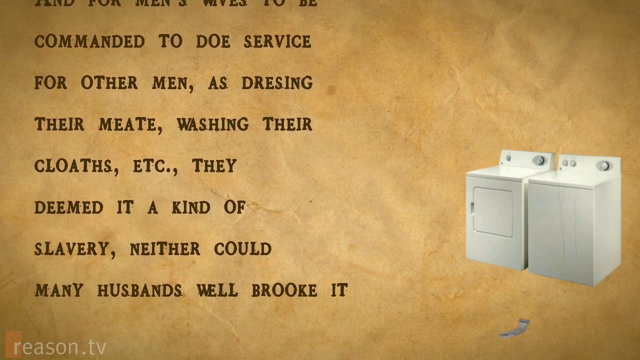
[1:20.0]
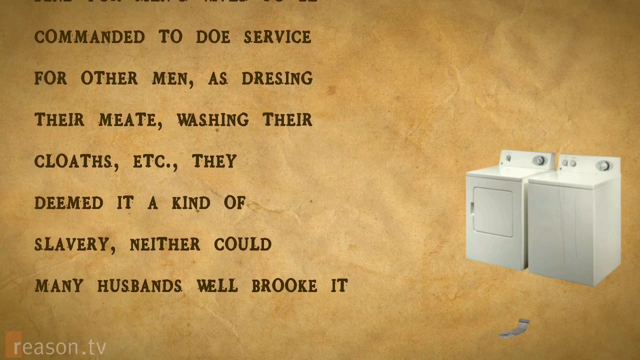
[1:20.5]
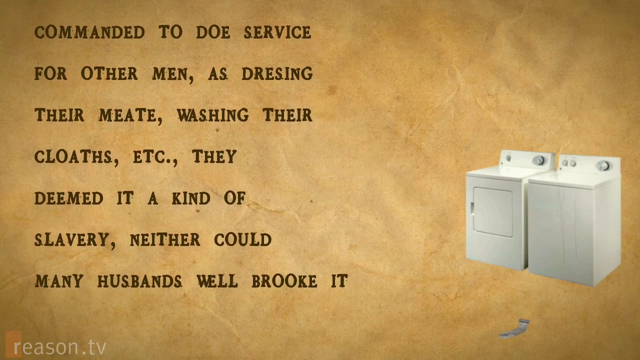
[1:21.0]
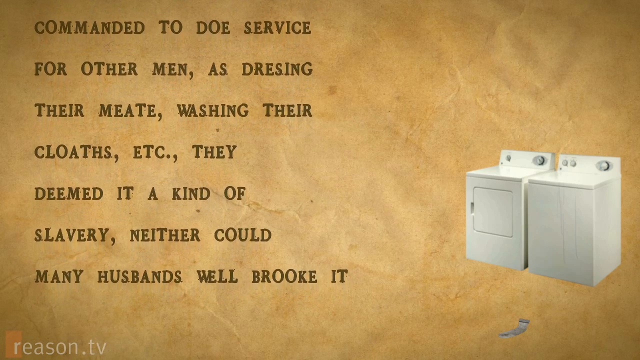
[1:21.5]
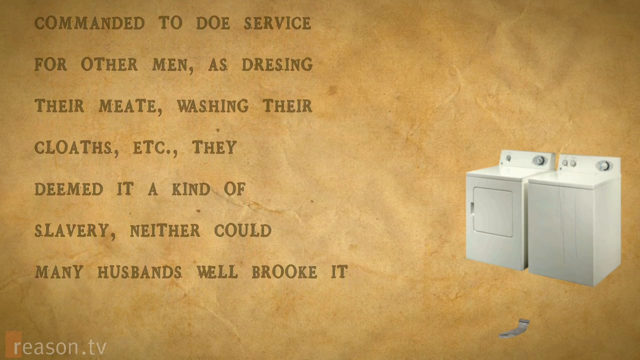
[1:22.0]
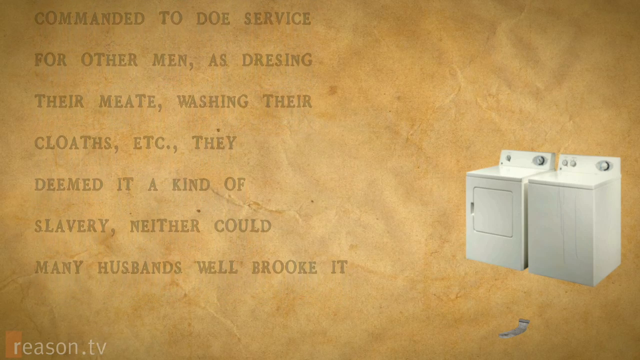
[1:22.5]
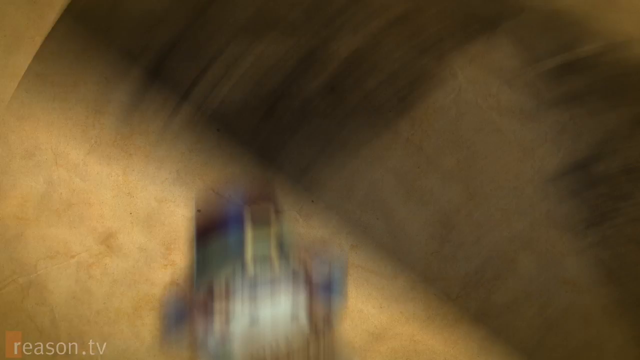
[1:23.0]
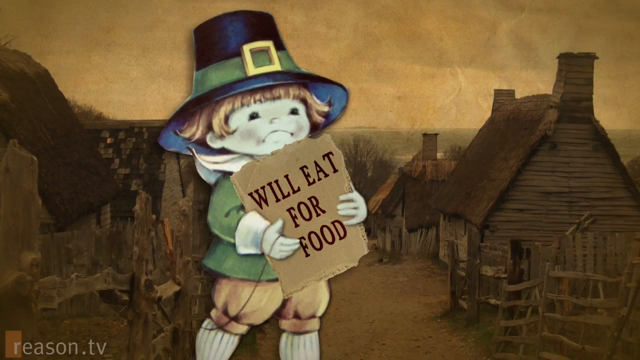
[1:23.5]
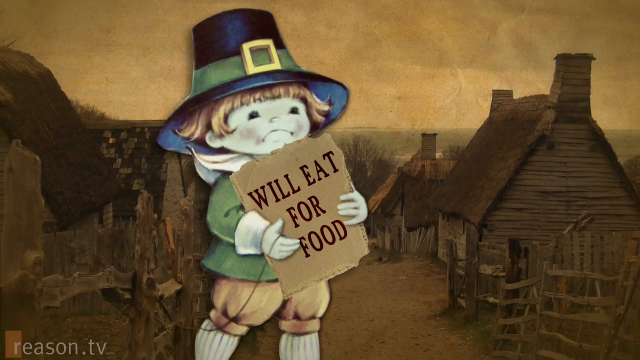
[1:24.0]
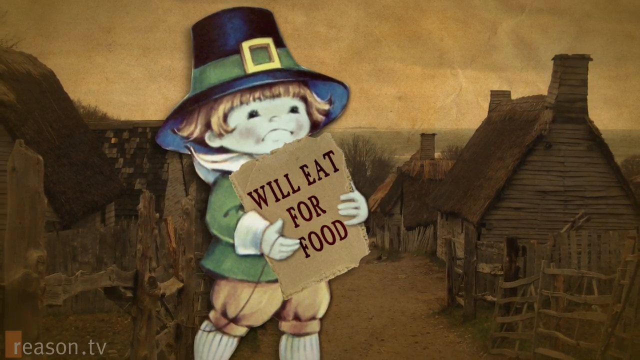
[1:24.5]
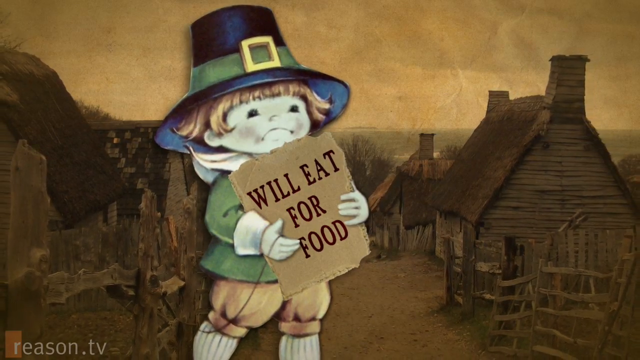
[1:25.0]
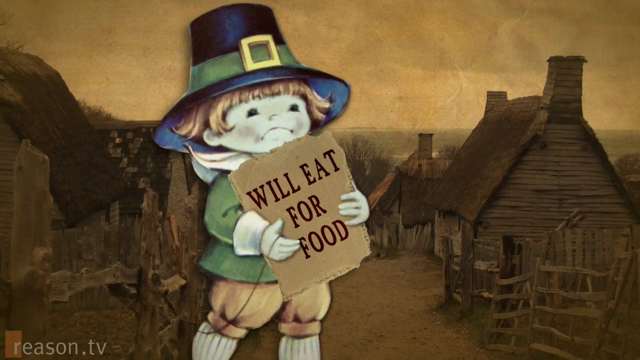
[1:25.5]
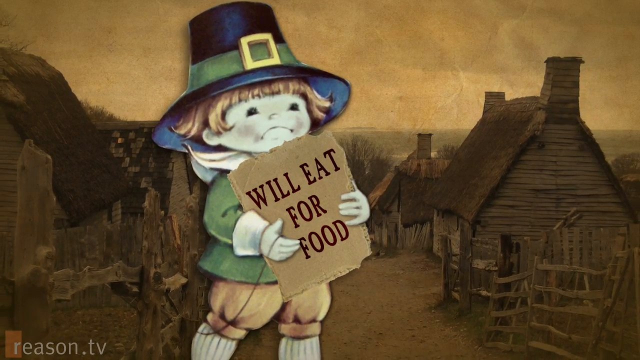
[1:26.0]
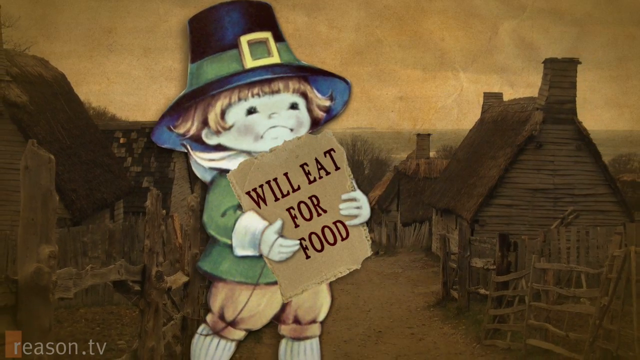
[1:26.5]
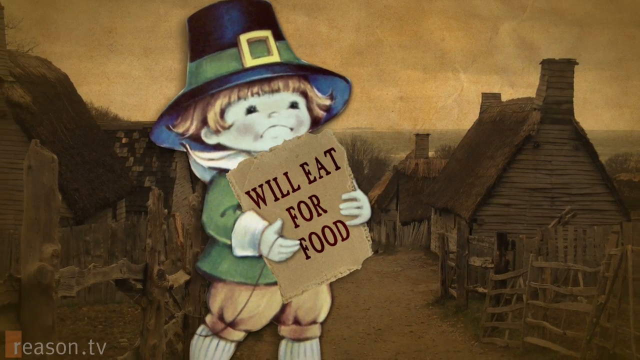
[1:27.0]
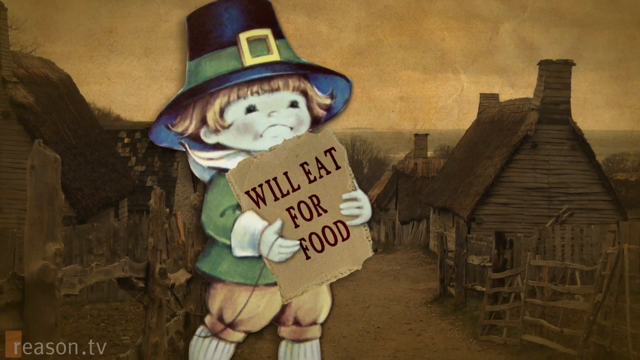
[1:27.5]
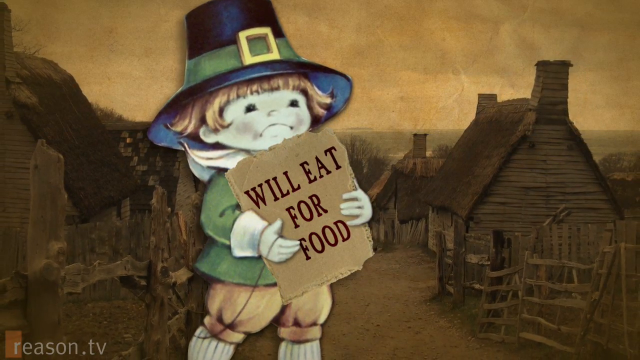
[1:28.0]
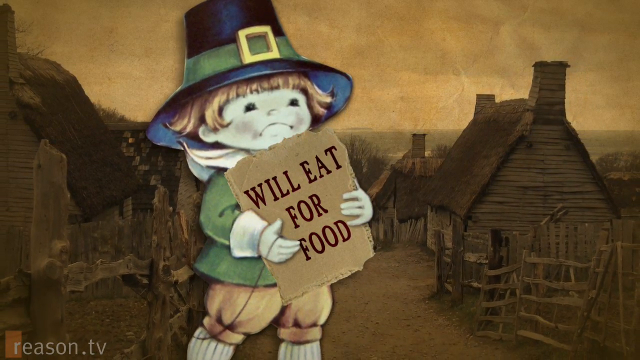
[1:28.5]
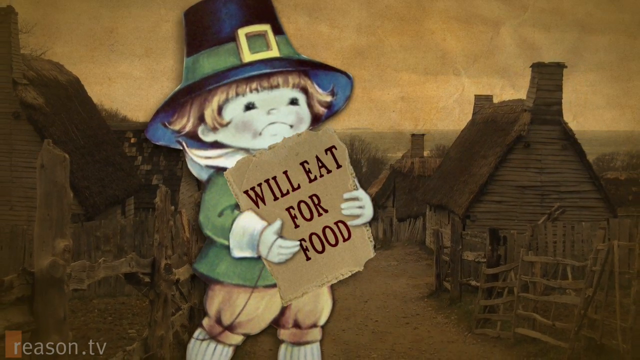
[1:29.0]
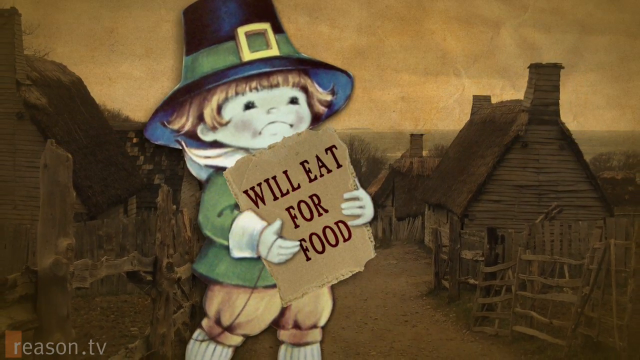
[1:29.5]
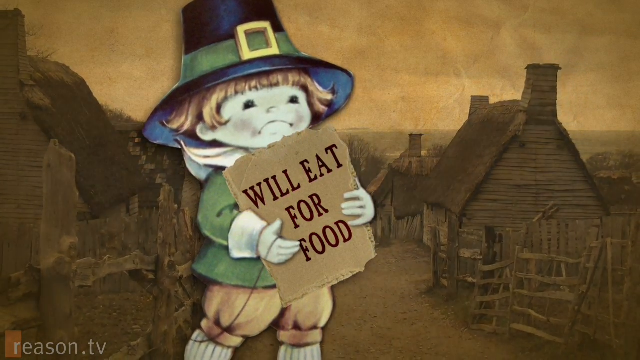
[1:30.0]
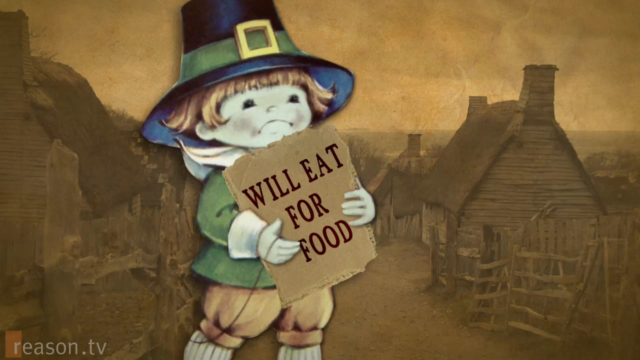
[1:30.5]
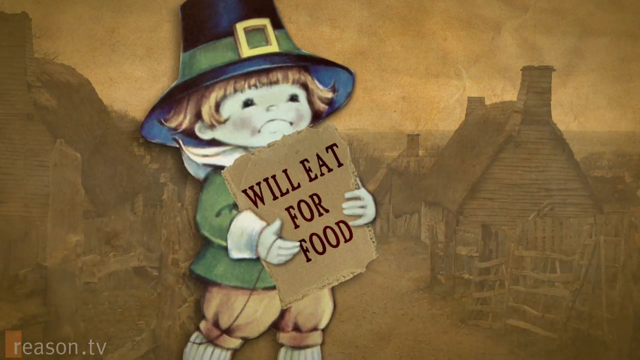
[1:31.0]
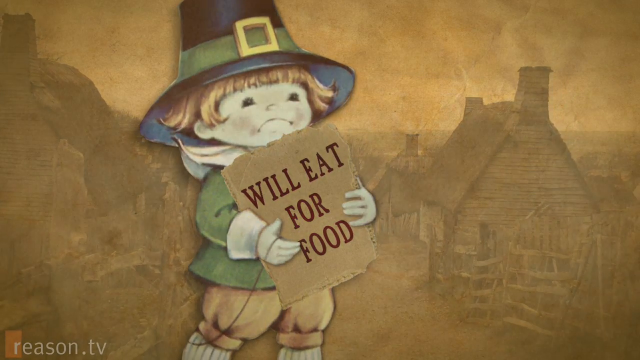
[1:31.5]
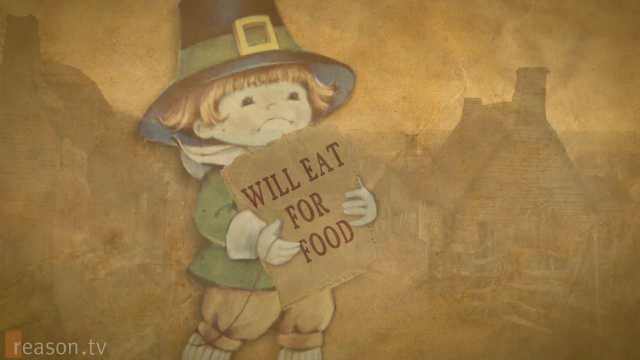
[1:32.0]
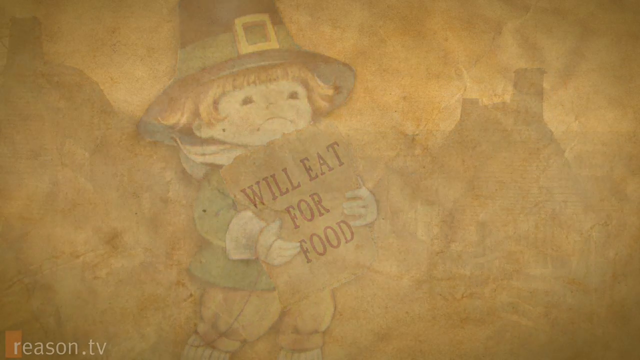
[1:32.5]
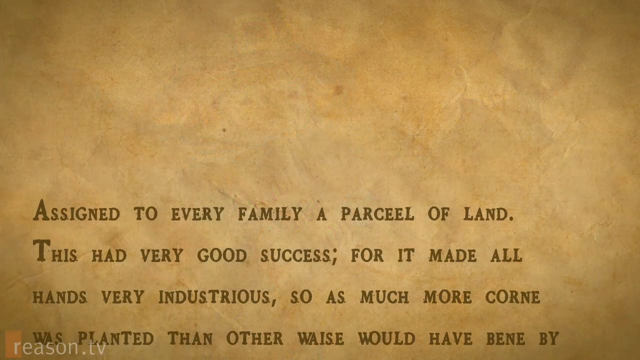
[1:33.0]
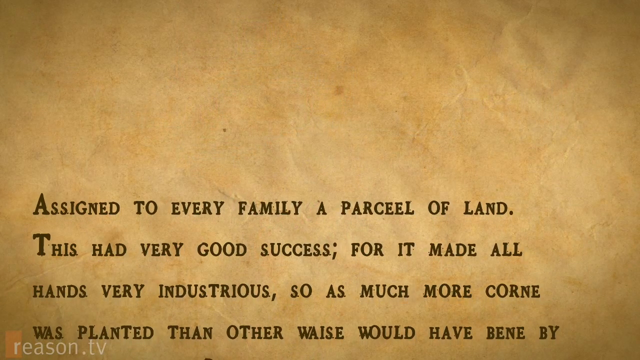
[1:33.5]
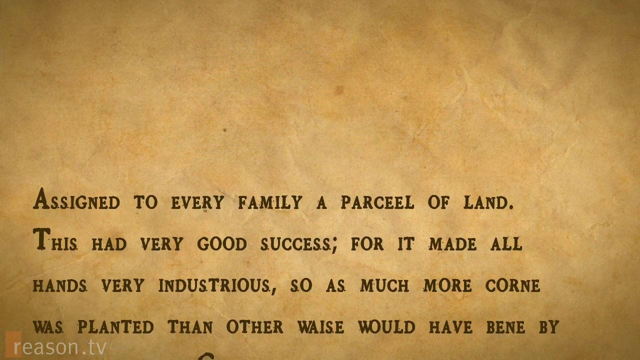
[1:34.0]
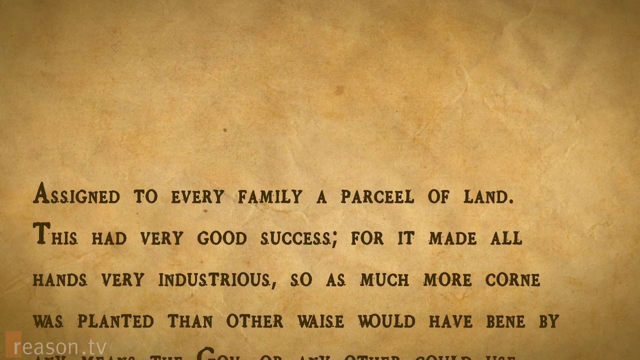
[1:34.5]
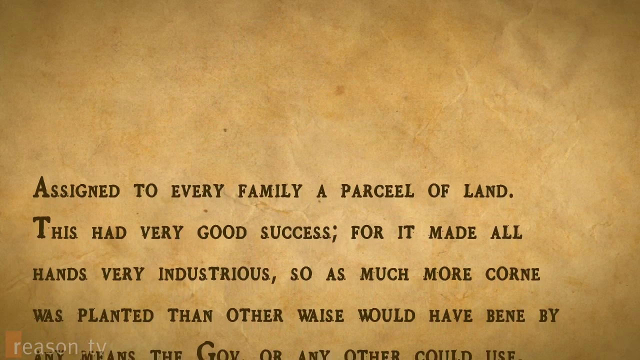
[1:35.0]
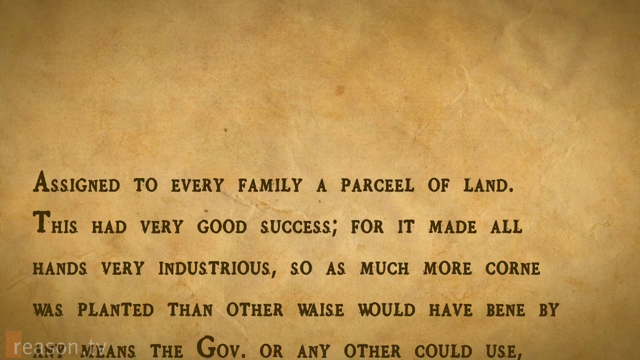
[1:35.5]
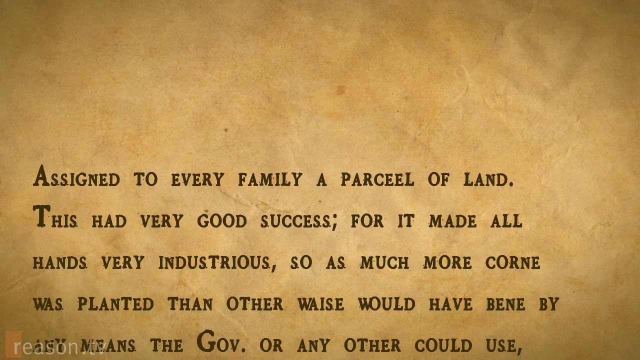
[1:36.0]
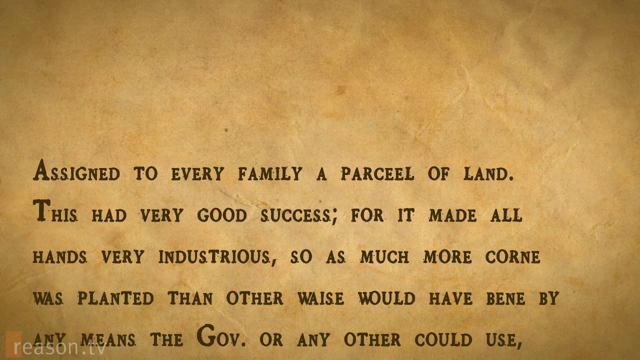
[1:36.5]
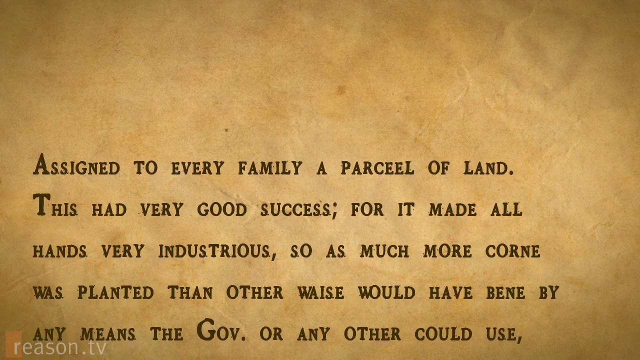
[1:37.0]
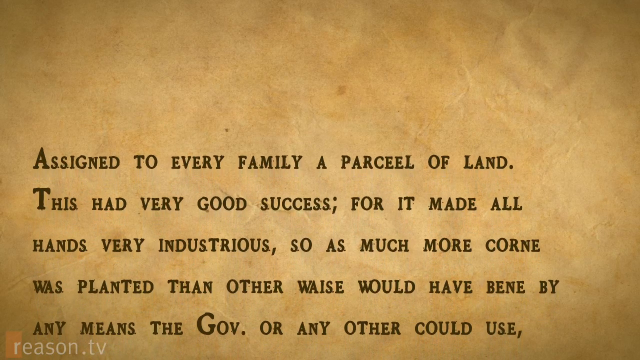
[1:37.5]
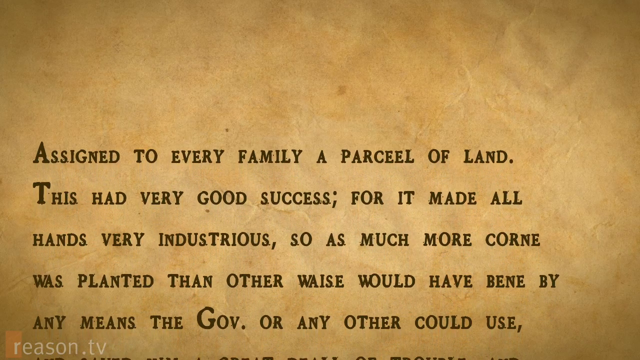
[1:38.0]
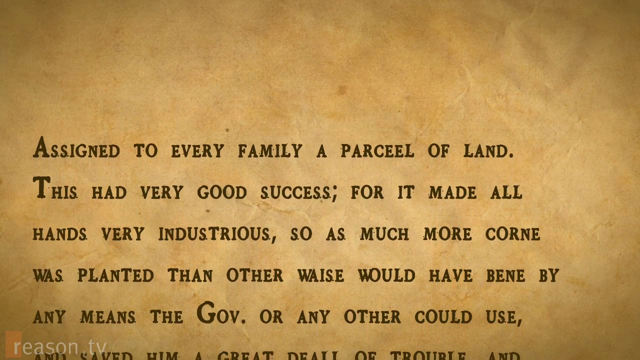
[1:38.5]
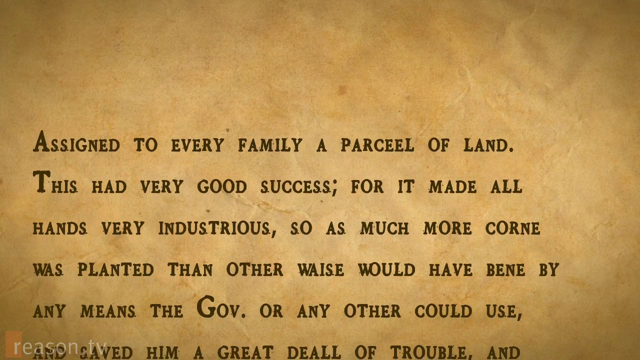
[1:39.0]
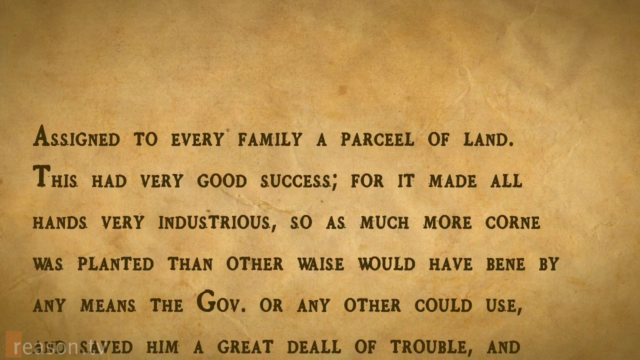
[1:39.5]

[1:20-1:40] The background shows housing from a really long time ago, imposed on the old paper background. Everything looks like it is made of wood; the houses look like they are made from a bunch of sticks, they all have chimneys, and the roofs go almost all the way down to about two feet from the ground. No windows are visible. There are very rugged wooden fences, and there appear to be about five houses in the background. A digital cartoon pilgrim child with an upside-down, sad face holds a photoshopped sign that says "we'll eat for food," standing in front of the old-time village. The pilgrim fades away, as does the village, and more text comes up that says "assigned to every family."